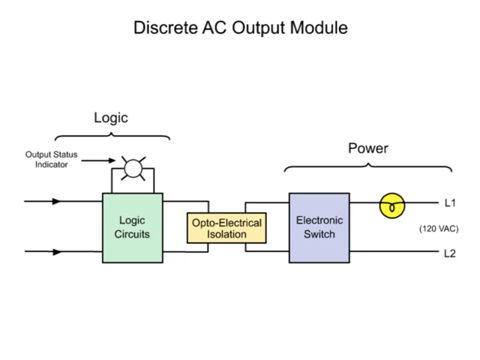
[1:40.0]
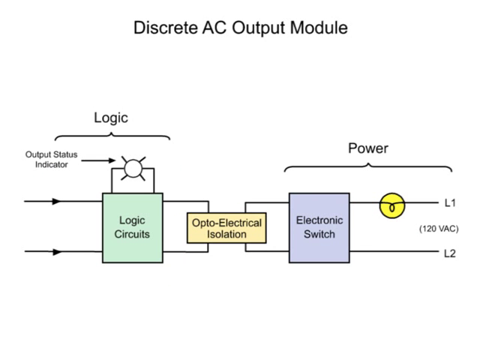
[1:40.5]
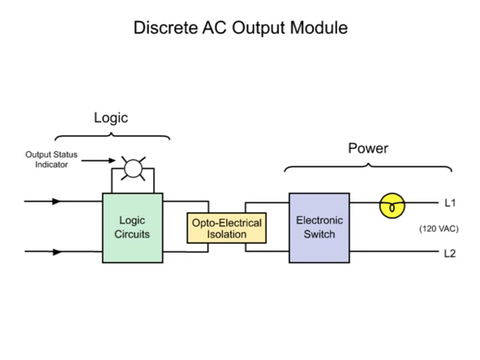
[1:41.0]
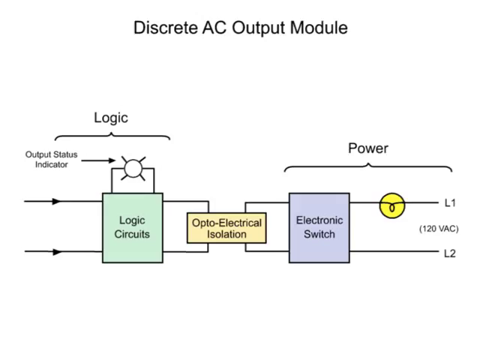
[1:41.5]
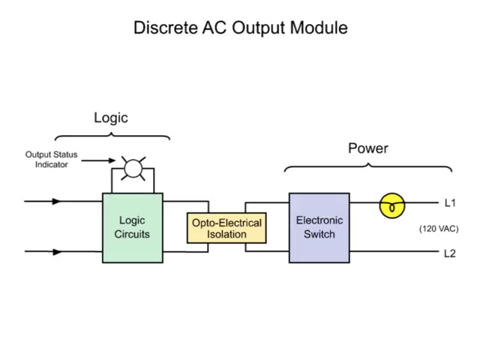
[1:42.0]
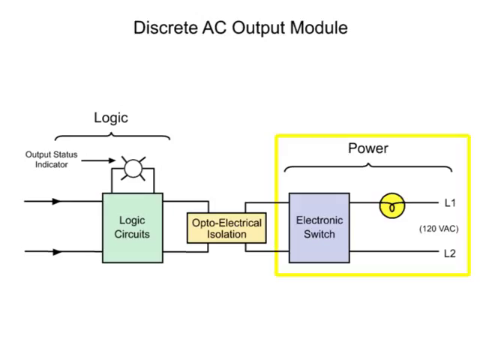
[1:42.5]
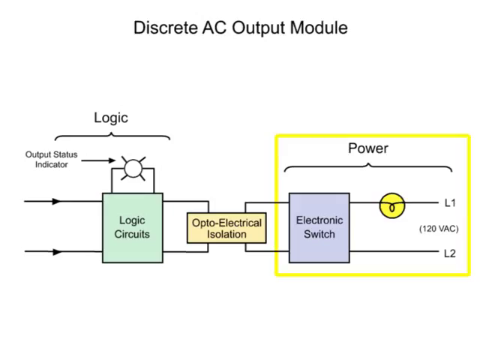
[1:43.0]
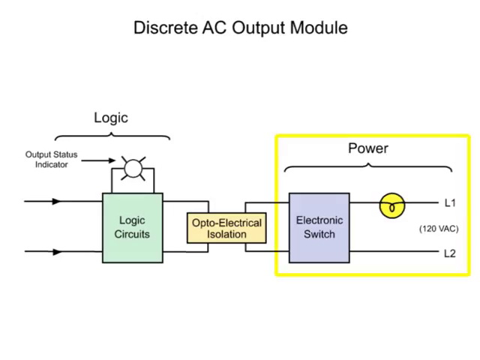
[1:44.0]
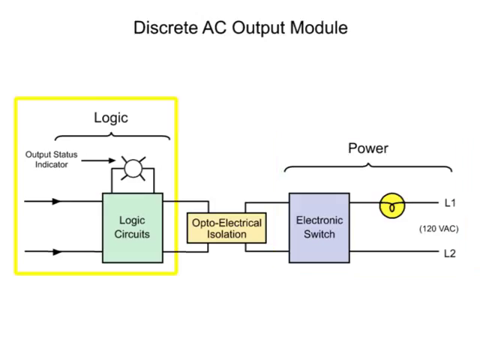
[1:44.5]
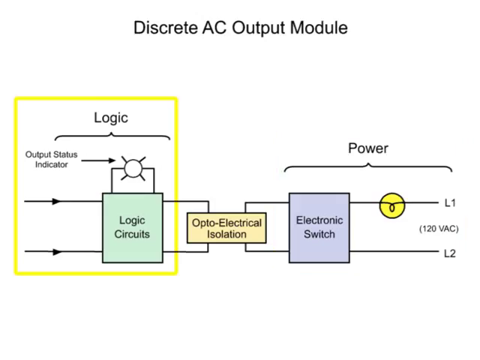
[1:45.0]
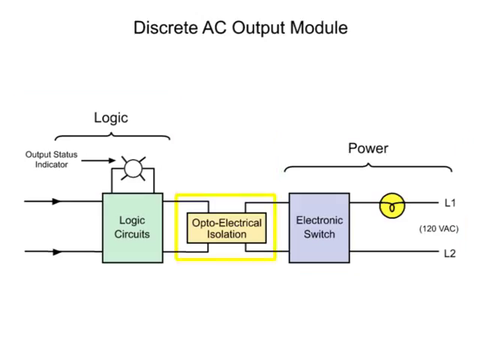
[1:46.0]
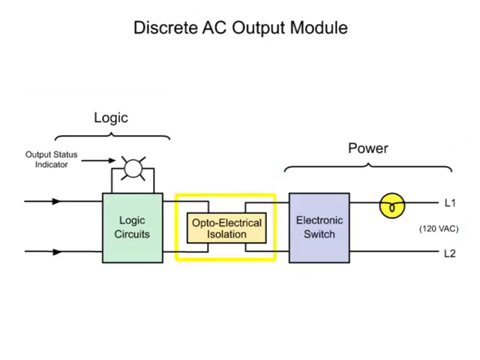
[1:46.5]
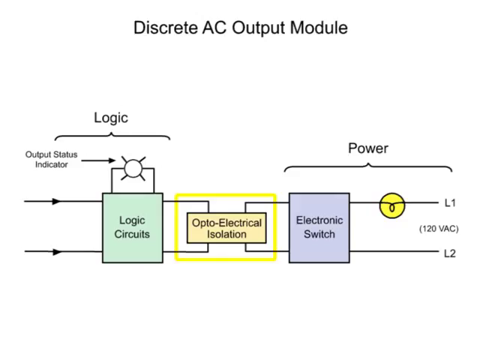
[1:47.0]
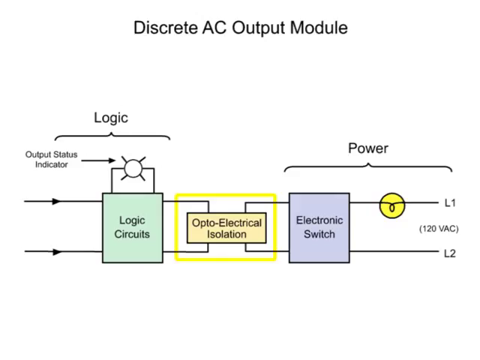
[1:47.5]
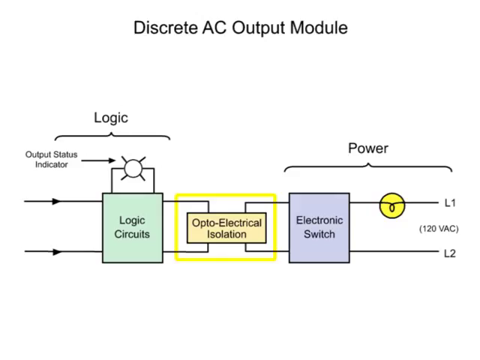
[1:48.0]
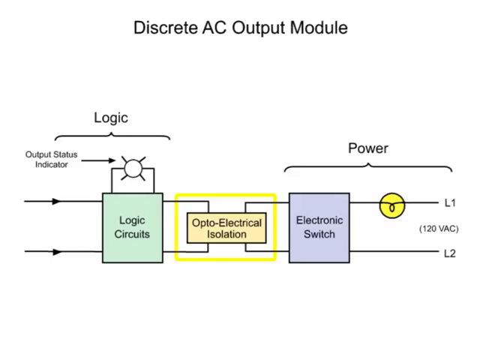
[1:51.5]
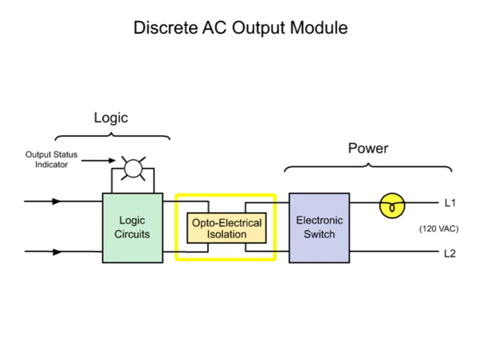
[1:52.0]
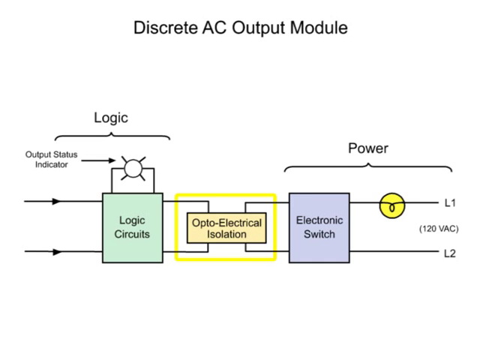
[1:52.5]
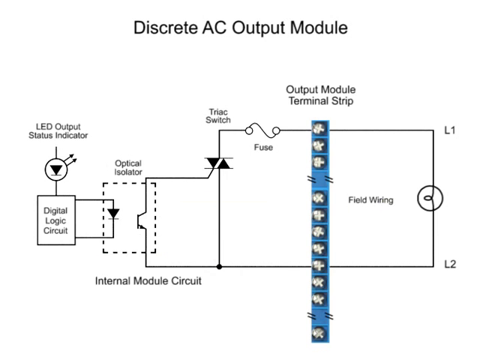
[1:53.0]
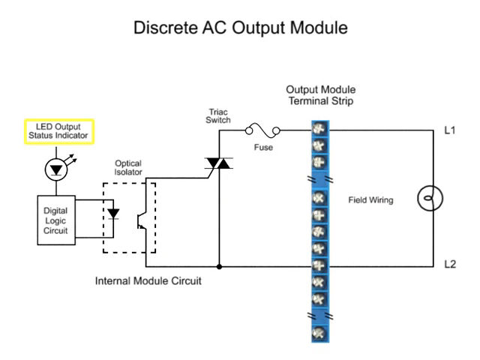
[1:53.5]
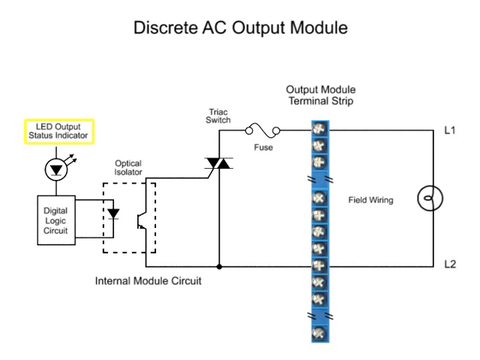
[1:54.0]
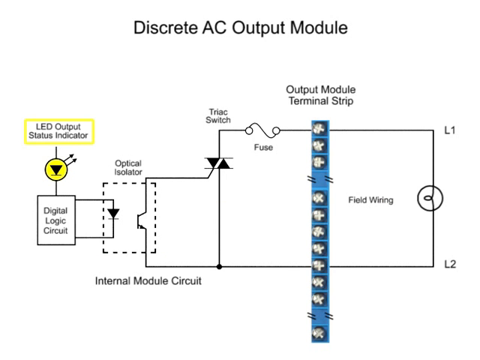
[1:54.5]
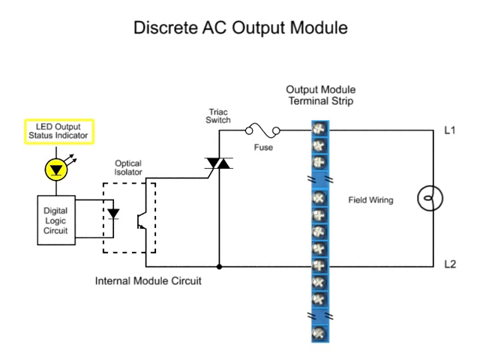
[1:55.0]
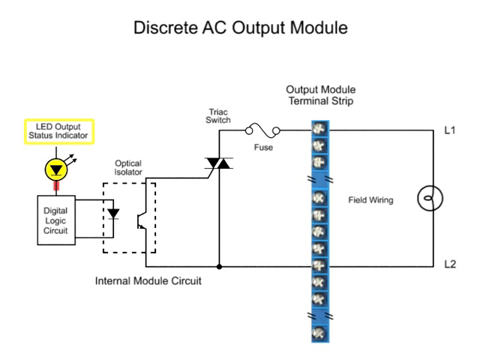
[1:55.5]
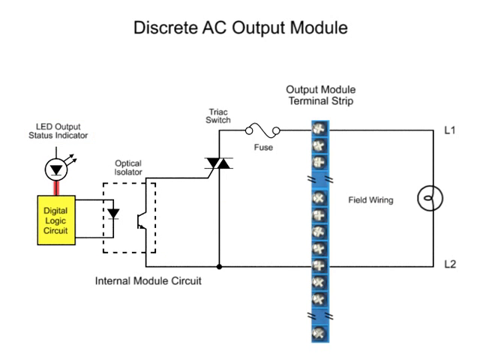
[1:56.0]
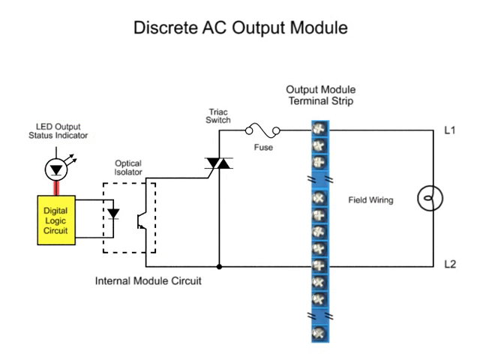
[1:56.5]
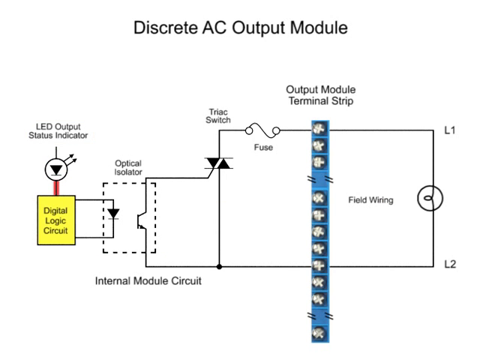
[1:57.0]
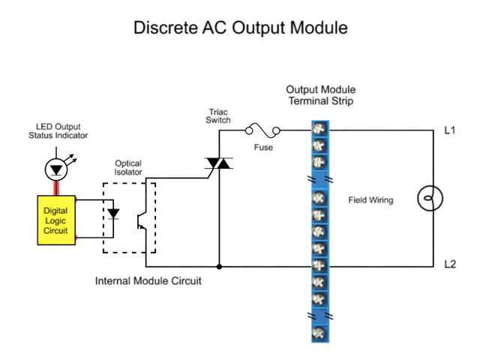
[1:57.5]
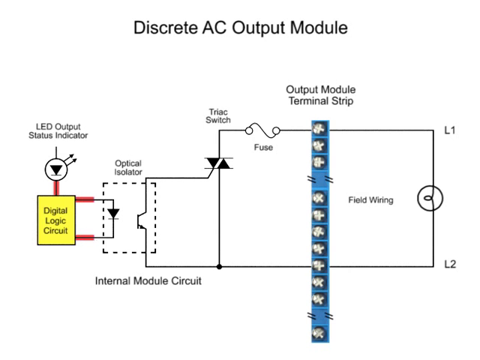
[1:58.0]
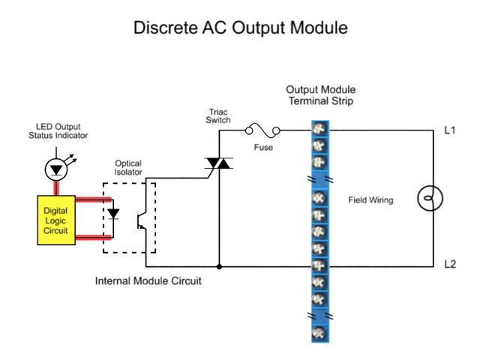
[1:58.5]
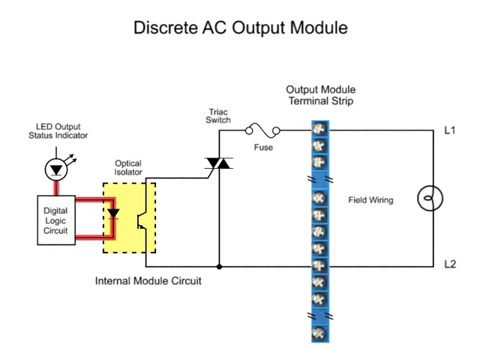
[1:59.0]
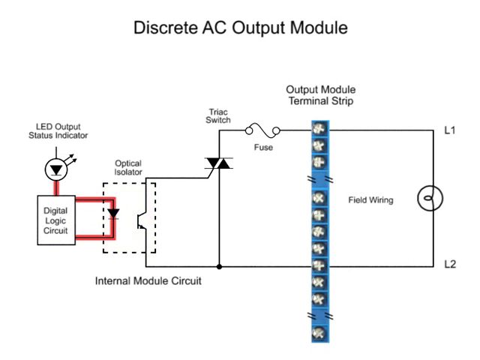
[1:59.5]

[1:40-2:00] The diagram shows logic and power. The output status indicator is shown on the logic side with the logic circuit, and optoelectrical isolation sits between the electronic switch and the logic circuit, followed by power. Later a summarized, more detailed circuit is shown: an LED output status indicator, a digital logic circuit, and an optical isolator, with the internal module circuit beneath. At the top right is a trike switch, followed by a fuse, field wiring, the output module terminal strip, more field wiring, and L1 and L2 at the end. The diagram clearly shows the current flowing from the LED output status indicator into the digital logic circuit and on to the end.